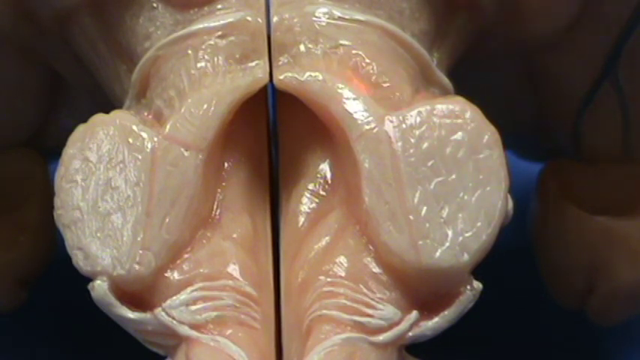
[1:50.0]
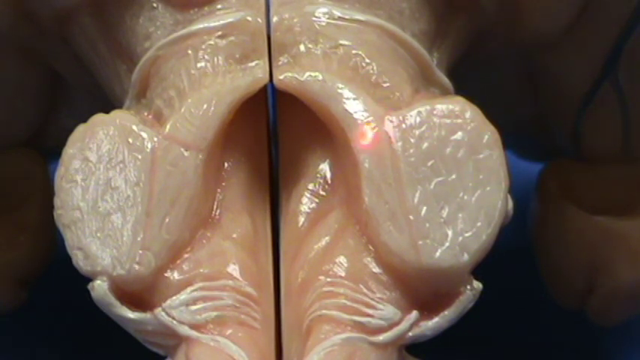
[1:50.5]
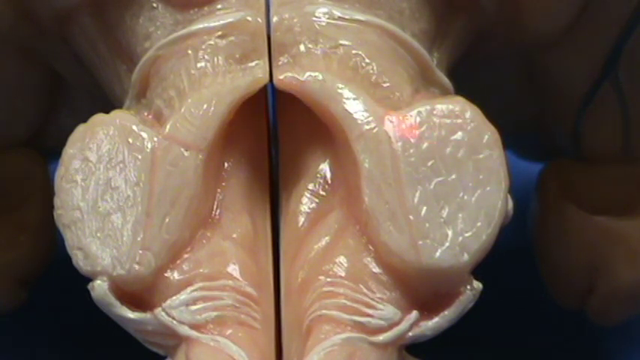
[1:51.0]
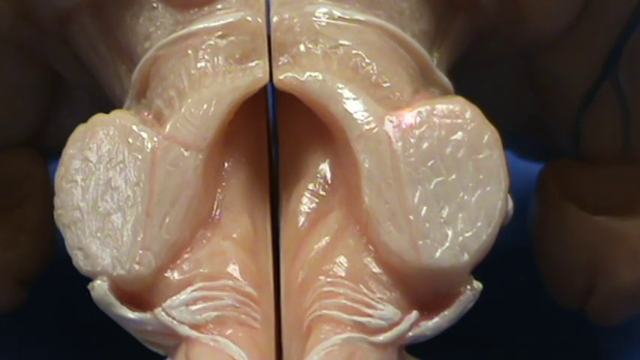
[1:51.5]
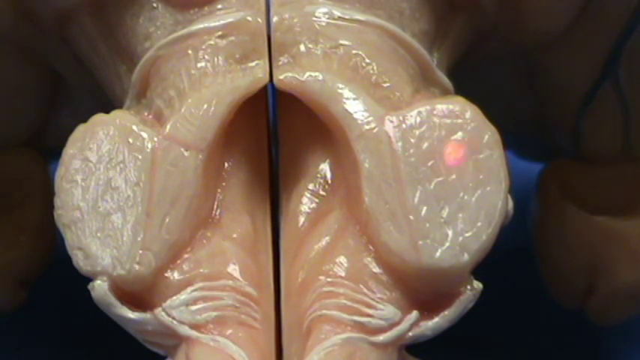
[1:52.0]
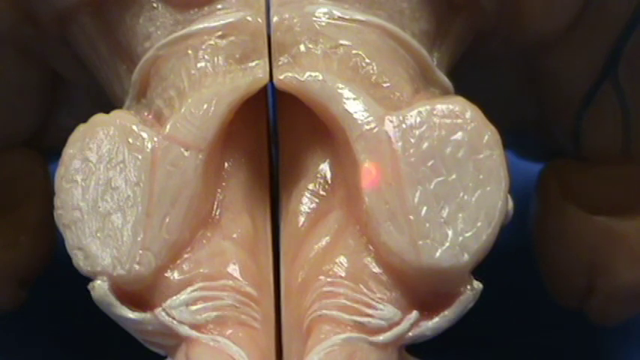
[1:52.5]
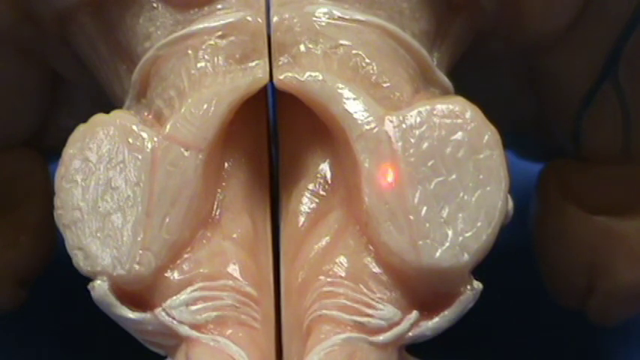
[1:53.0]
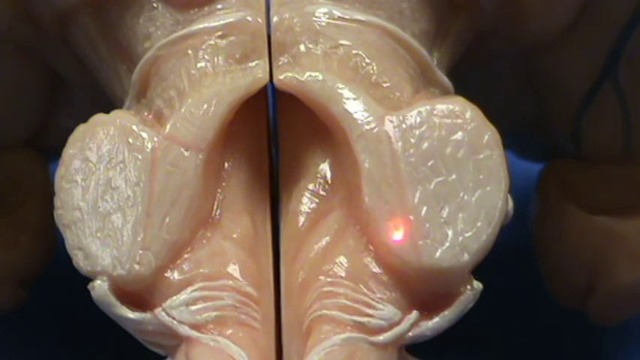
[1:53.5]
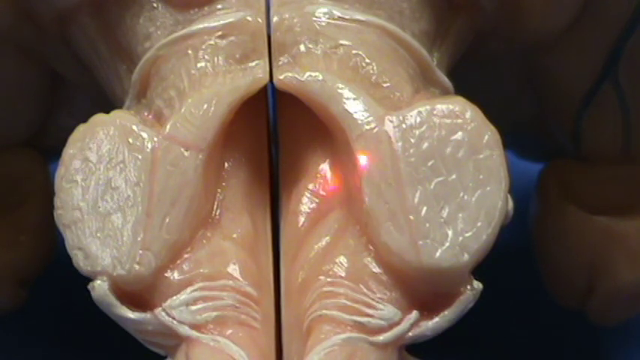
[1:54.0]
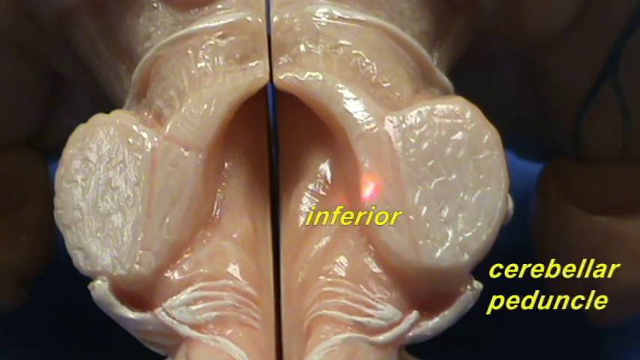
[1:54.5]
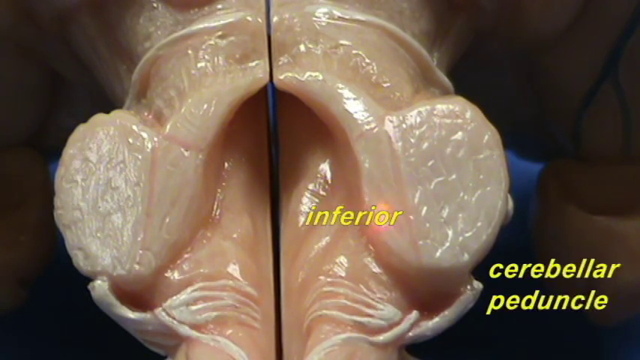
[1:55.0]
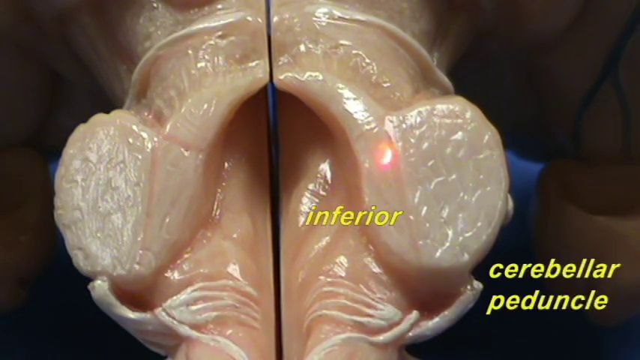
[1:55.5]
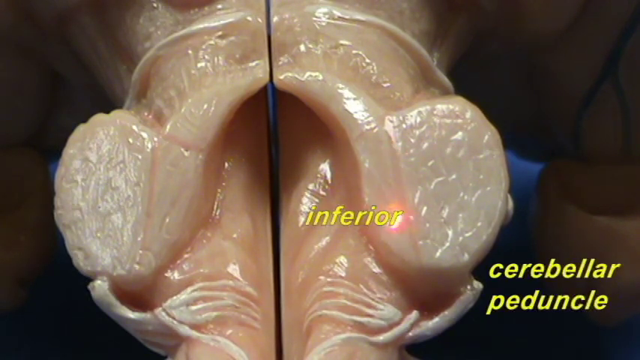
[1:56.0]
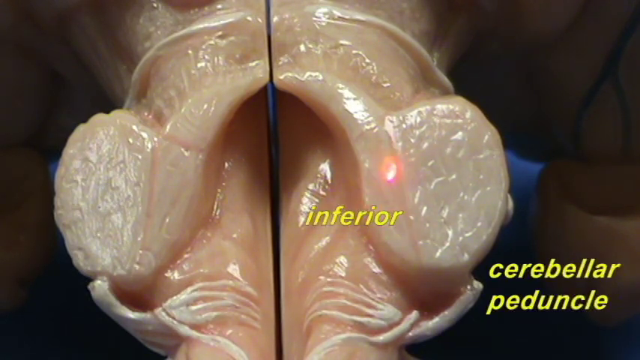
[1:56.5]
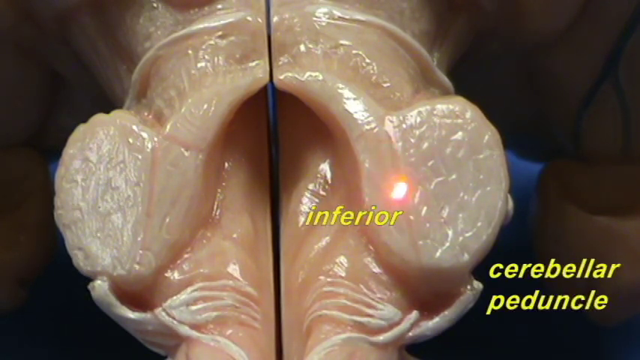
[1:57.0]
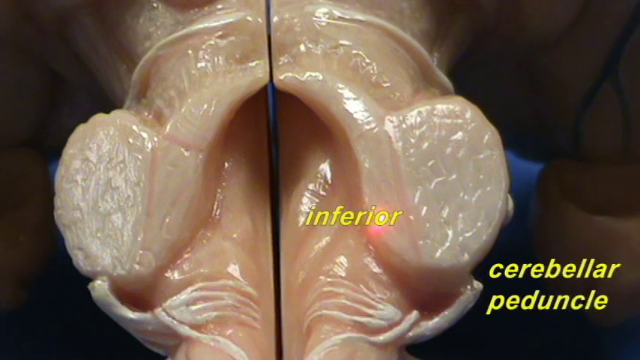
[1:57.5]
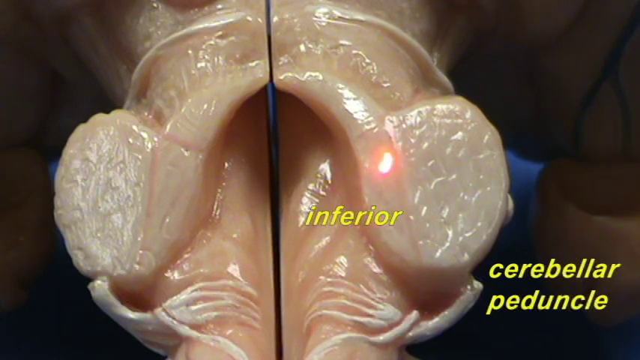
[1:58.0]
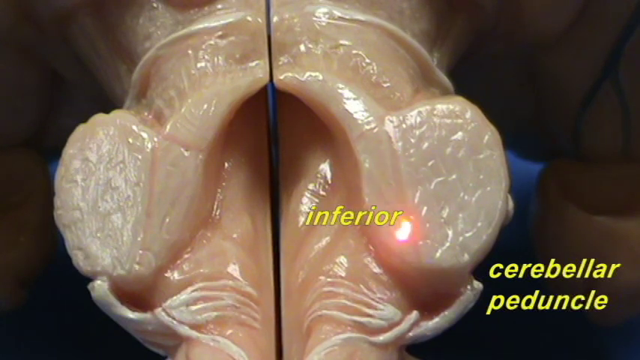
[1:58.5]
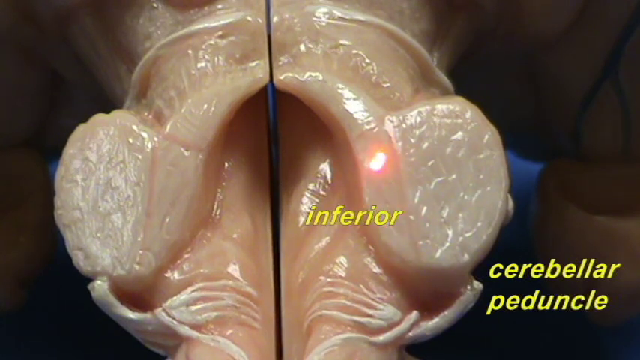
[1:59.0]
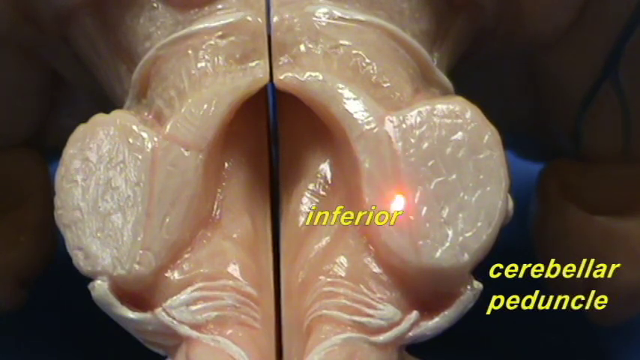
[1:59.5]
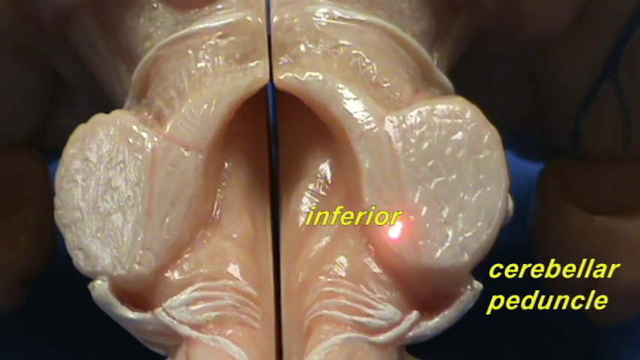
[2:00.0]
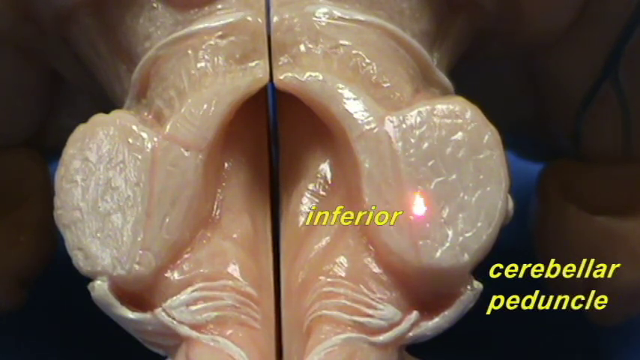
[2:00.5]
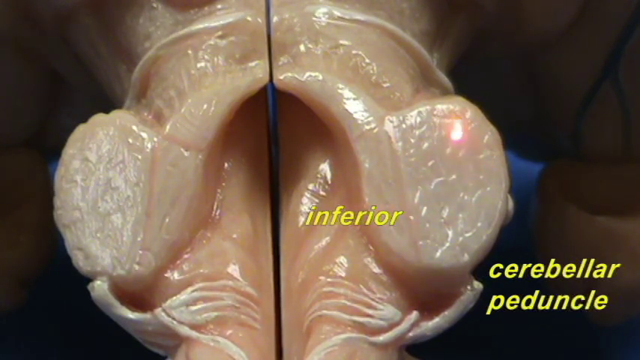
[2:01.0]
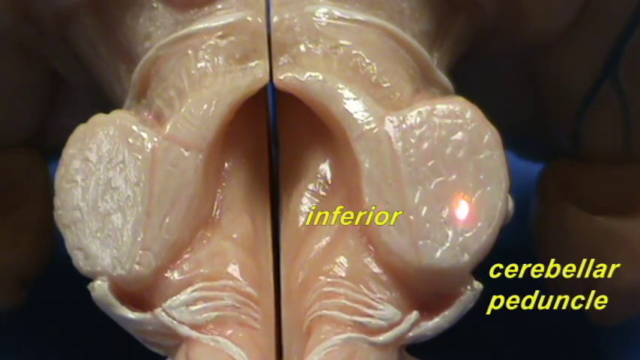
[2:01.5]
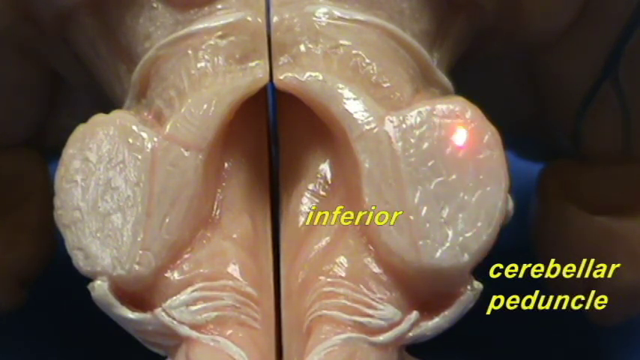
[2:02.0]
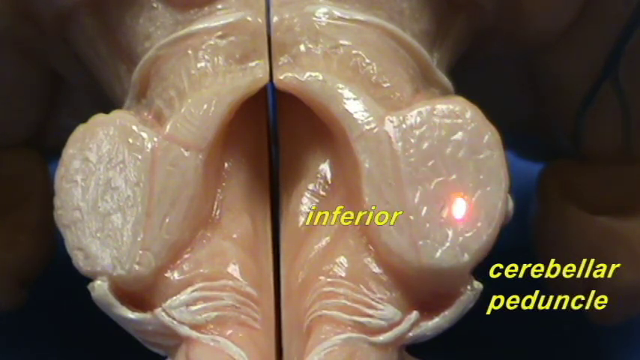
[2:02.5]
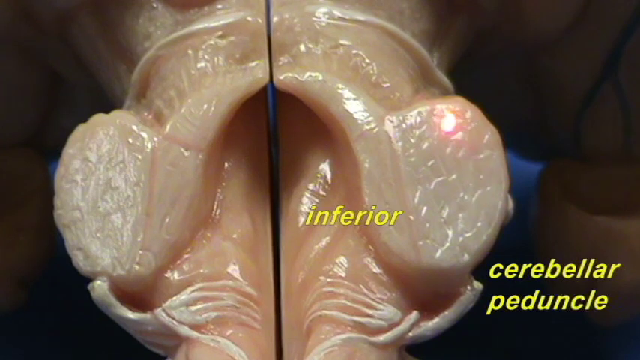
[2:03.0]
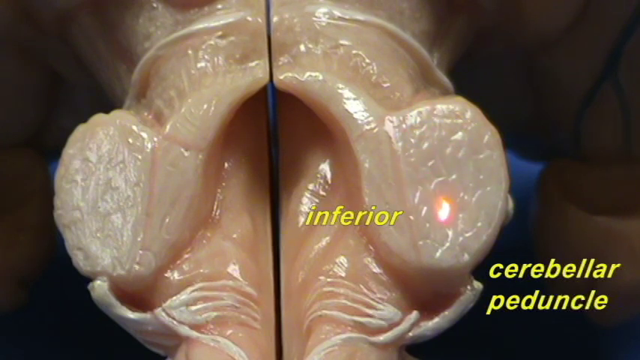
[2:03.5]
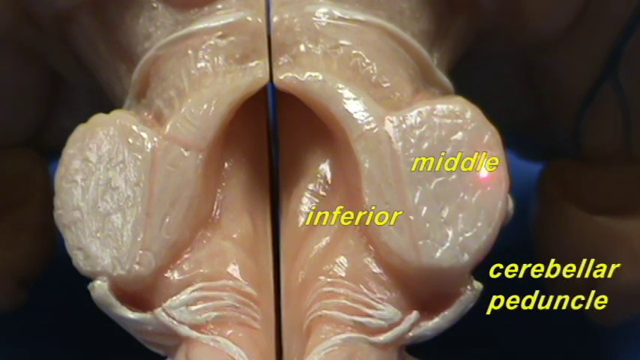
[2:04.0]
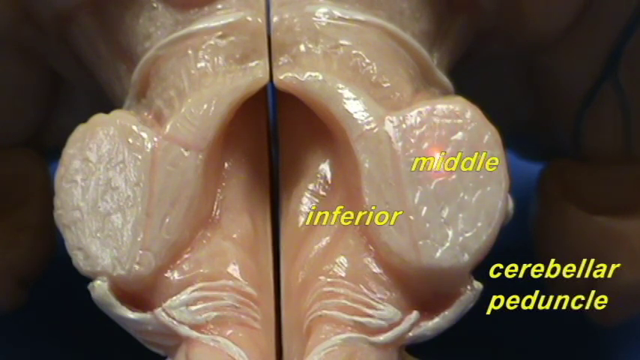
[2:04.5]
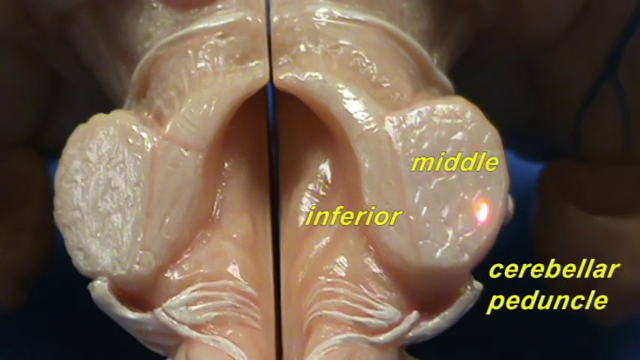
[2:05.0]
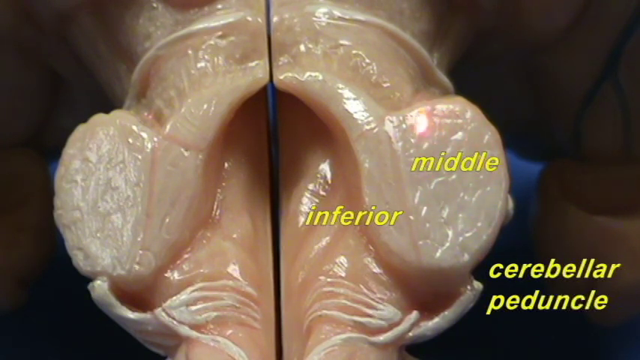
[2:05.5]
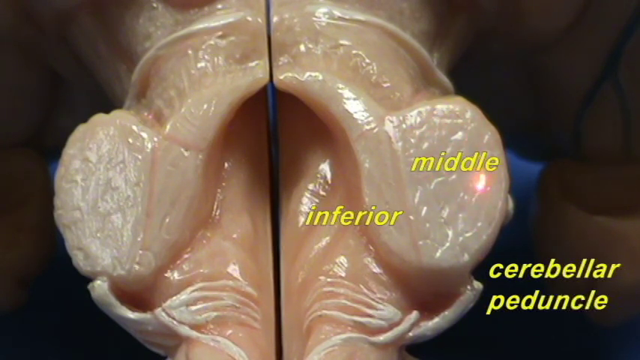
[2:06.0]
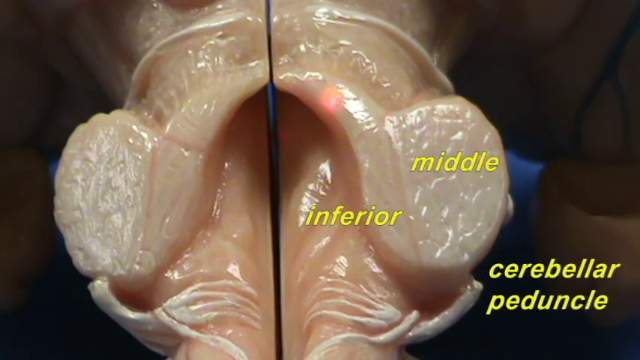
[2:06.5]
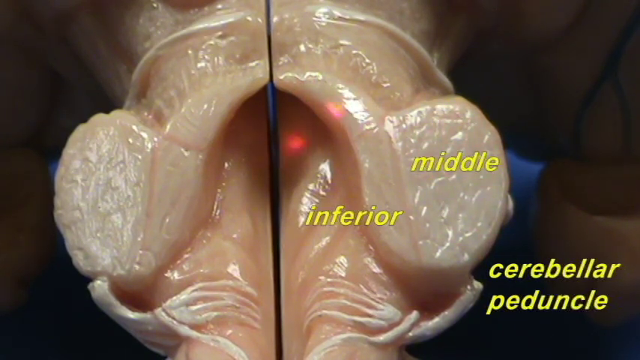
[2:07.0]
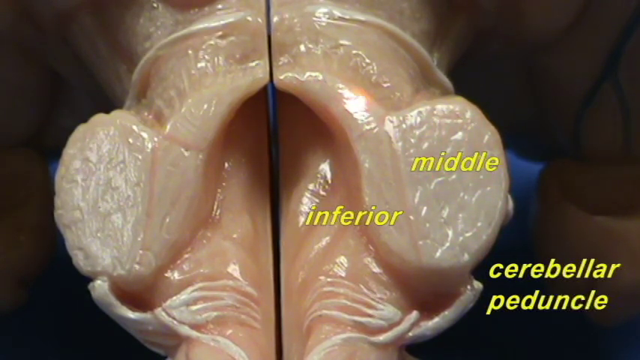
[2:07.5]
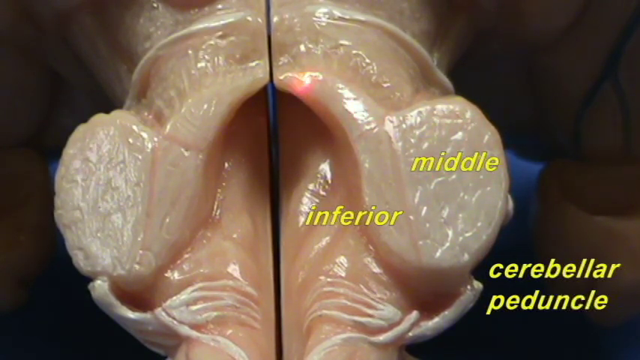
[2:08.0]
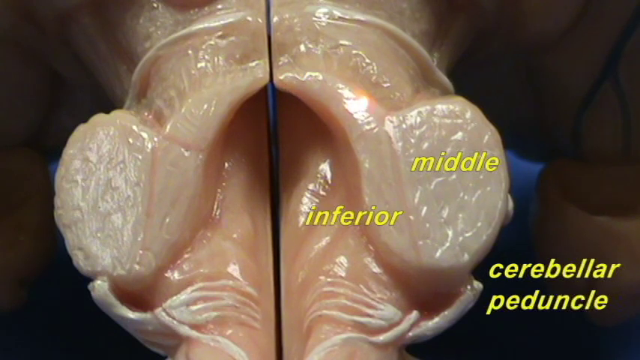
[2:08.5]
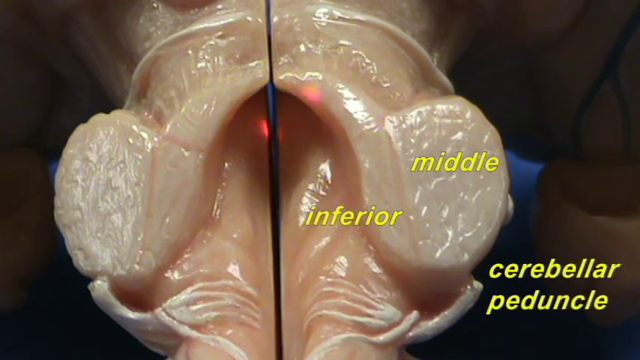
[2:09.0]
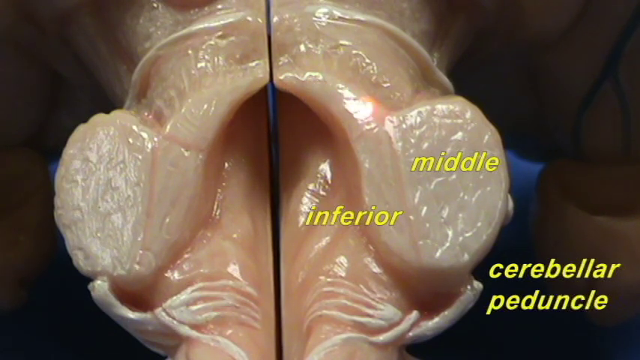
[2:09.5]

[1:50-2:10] The laser pointer points at the smooth flesh connecting the two disc-like parts of the brain stem. As the light moves down, waving back and forth over this smooth flesh, the word "inferior" appears on the screen over the flesh itself, and in the bottom right corner, off the model, text reads "cerebellar peduncle." The laser moves to the disc, and the word "middle" appears over the disc itself. The laser then goes back to the smooth ridge above, and the yellow word "superior" pops up as the light reaches the top of that smooth ridge, which curves up and over toward its matching counterpart on the other side of the model. Possibly this indicates that the smooth ridge and the wrinkly textured disk are all one piece of the brain stem, with different names for each section.